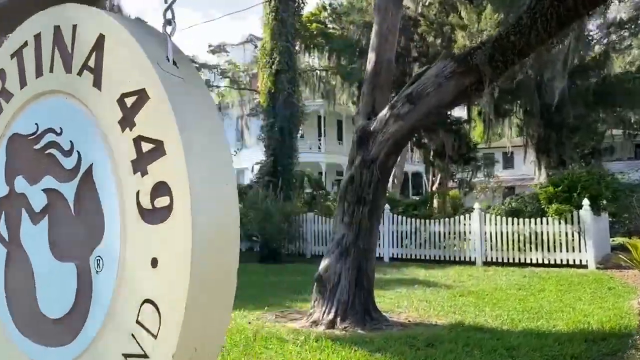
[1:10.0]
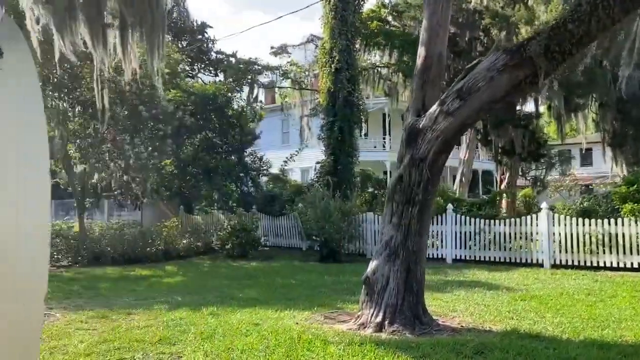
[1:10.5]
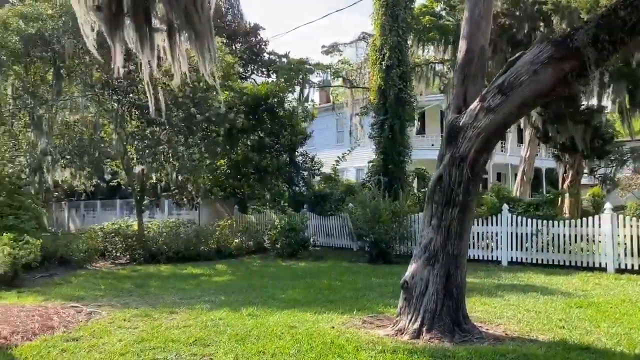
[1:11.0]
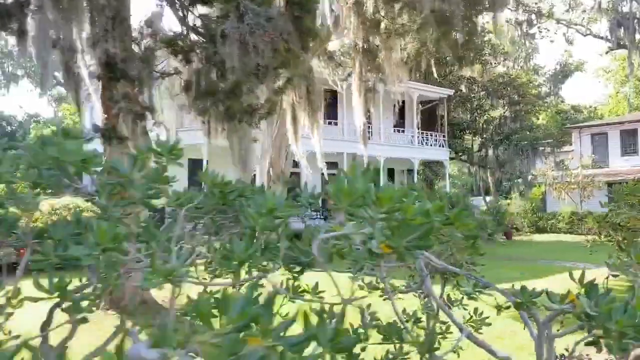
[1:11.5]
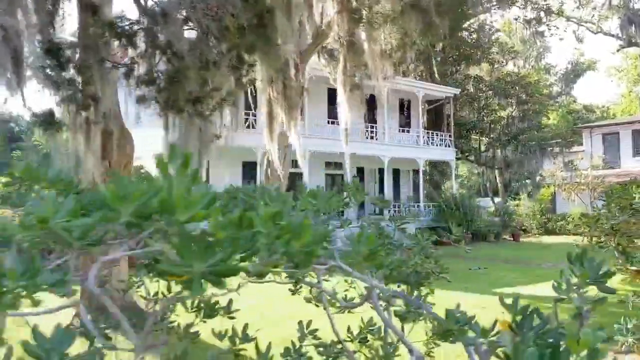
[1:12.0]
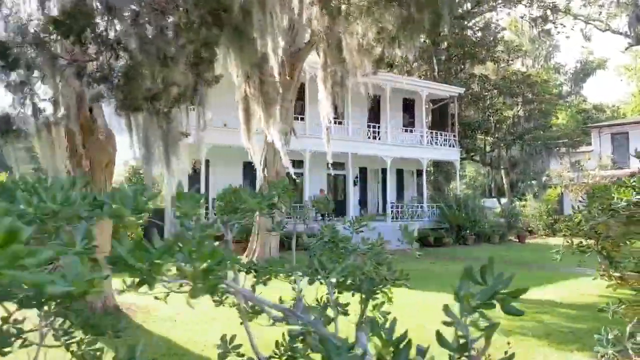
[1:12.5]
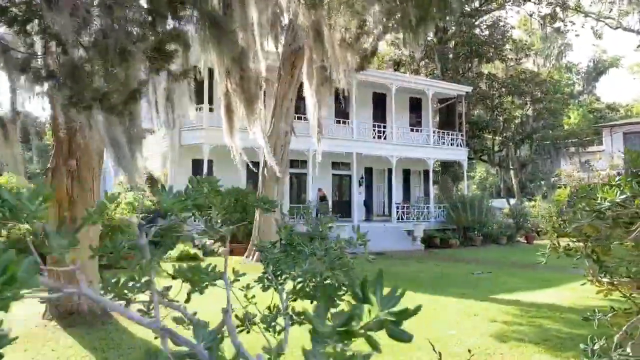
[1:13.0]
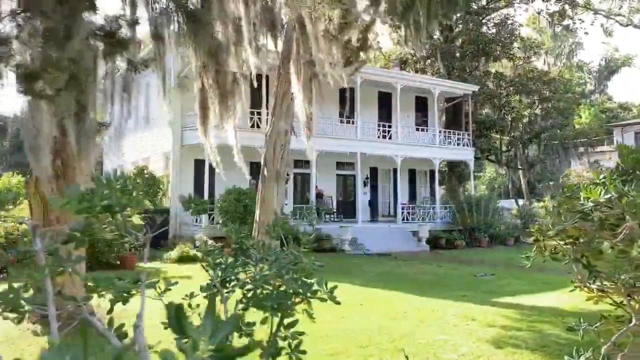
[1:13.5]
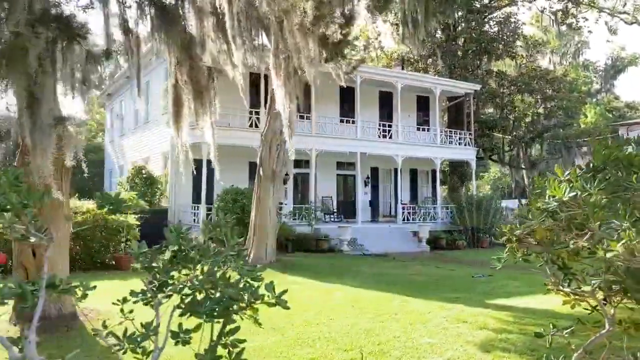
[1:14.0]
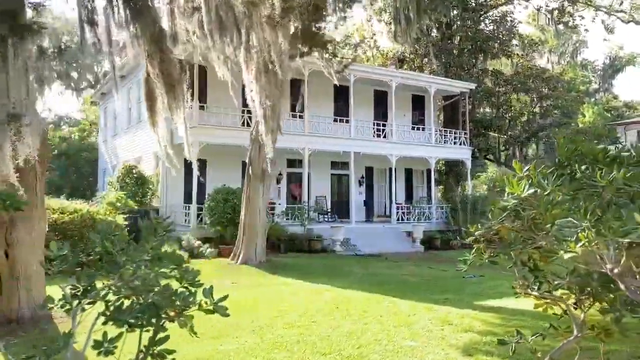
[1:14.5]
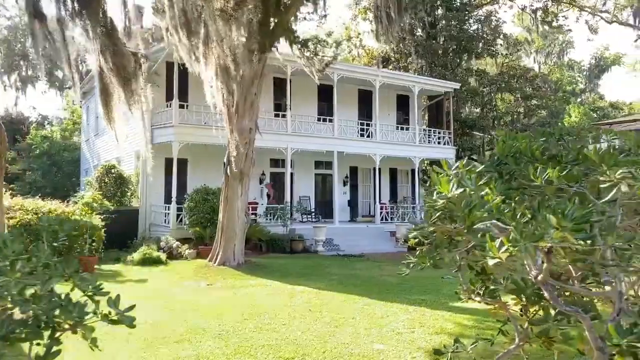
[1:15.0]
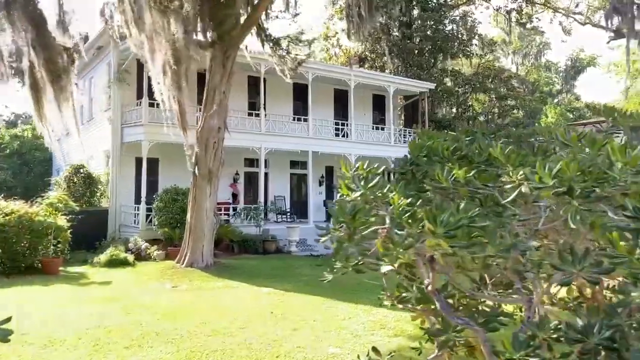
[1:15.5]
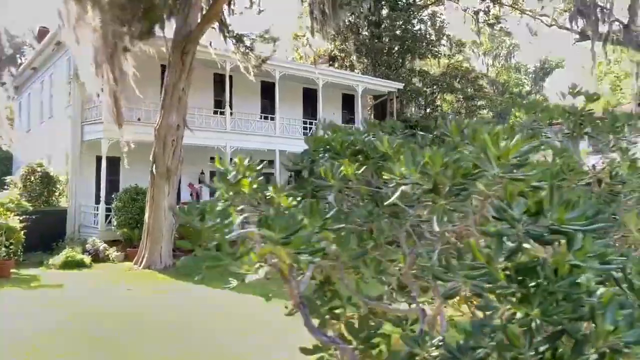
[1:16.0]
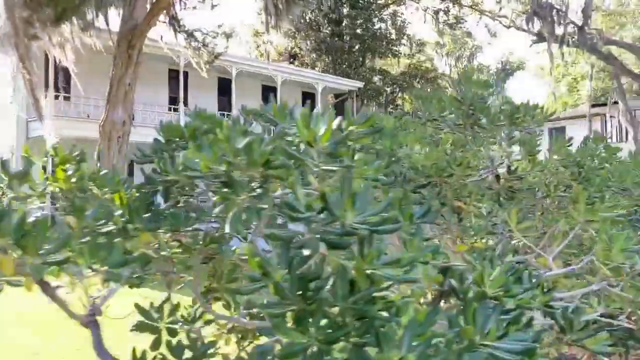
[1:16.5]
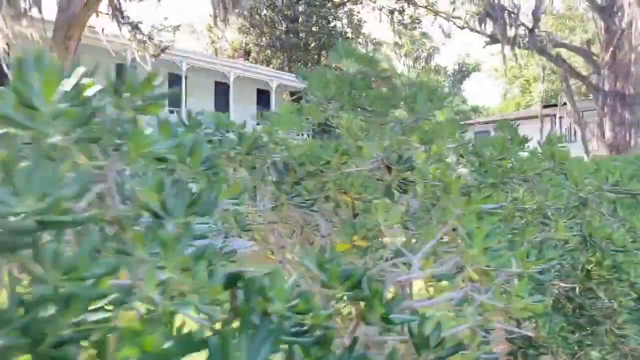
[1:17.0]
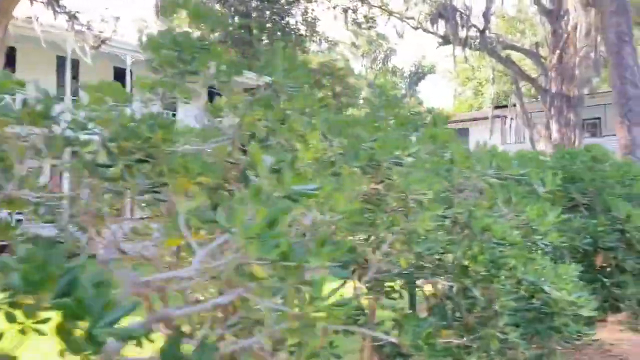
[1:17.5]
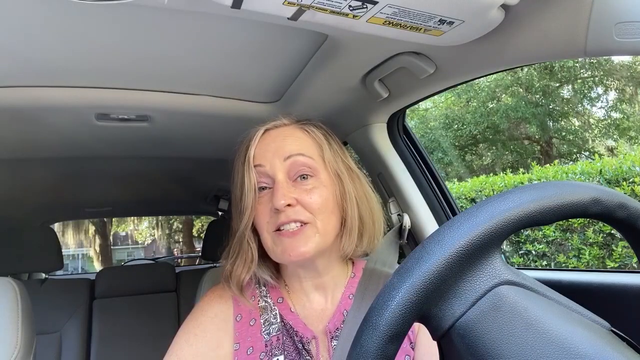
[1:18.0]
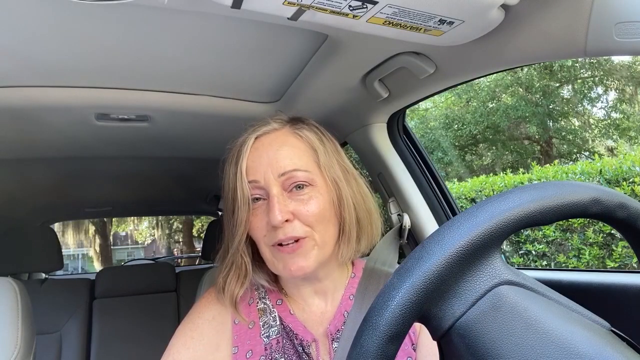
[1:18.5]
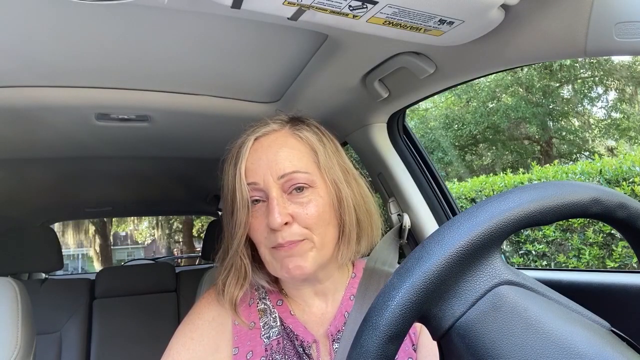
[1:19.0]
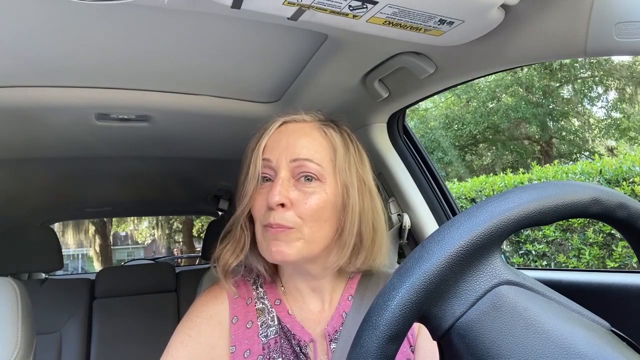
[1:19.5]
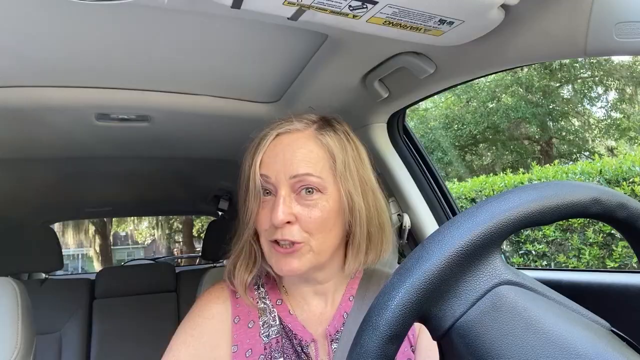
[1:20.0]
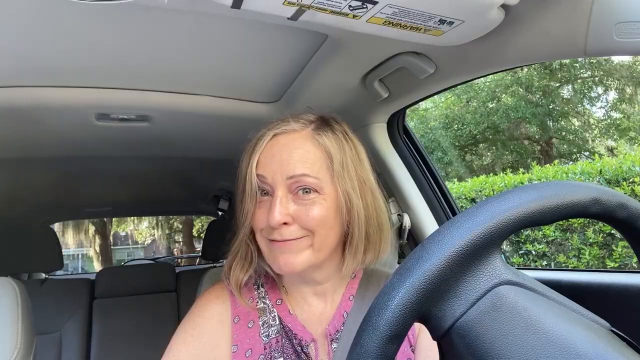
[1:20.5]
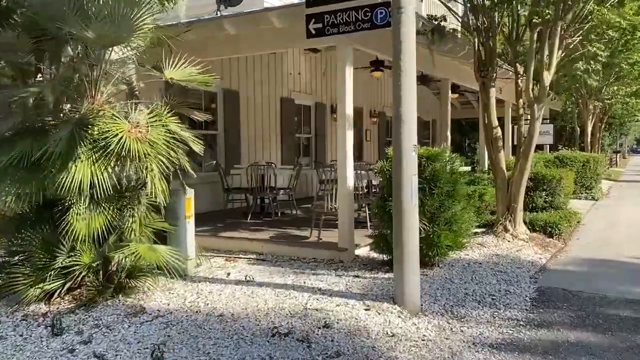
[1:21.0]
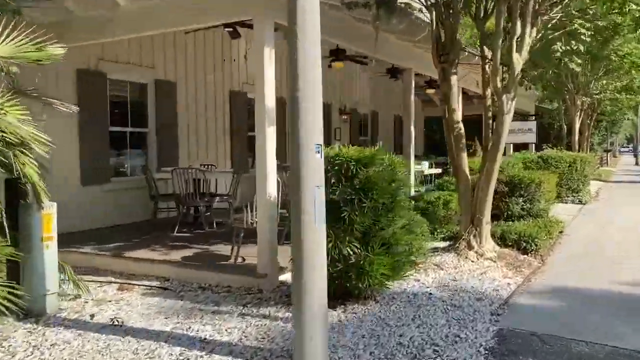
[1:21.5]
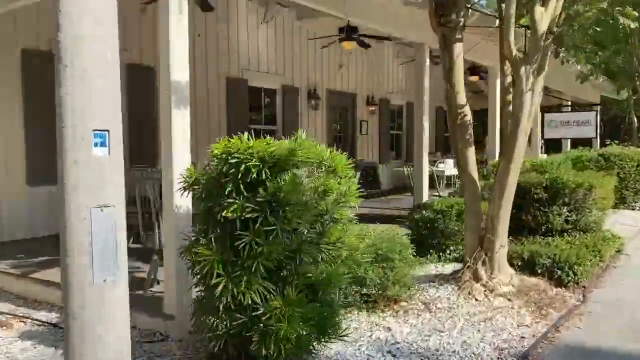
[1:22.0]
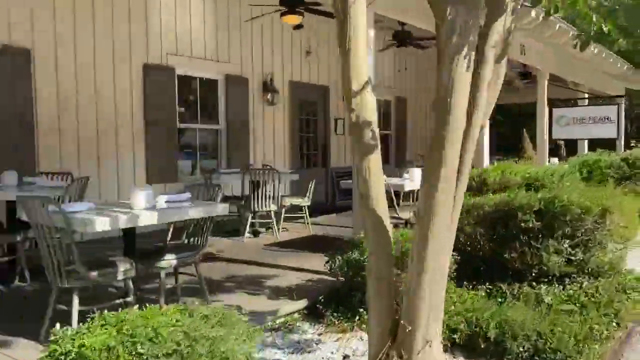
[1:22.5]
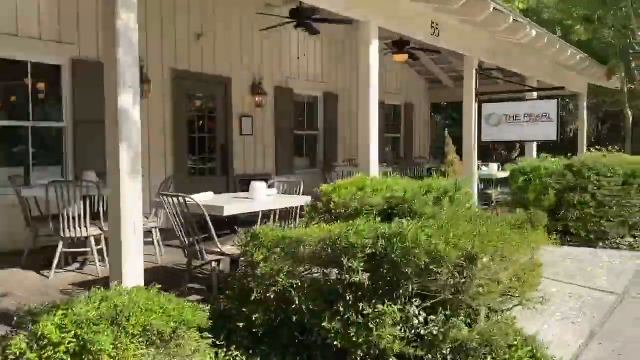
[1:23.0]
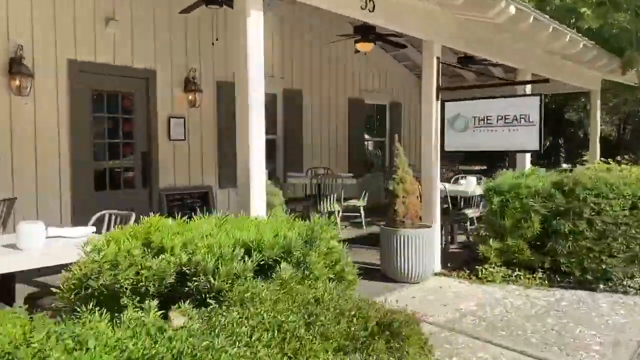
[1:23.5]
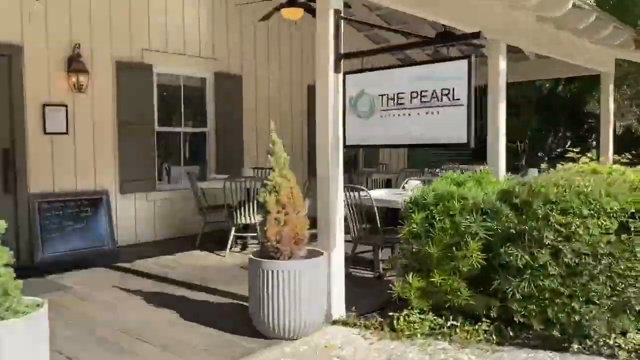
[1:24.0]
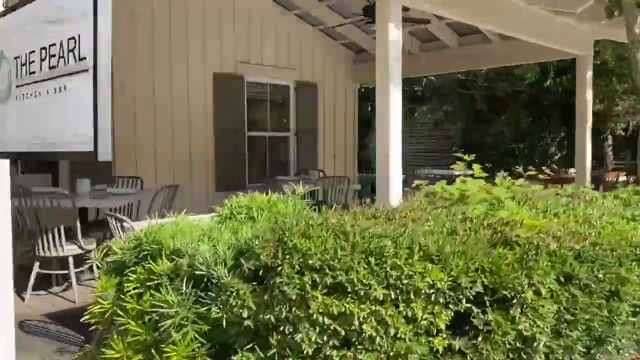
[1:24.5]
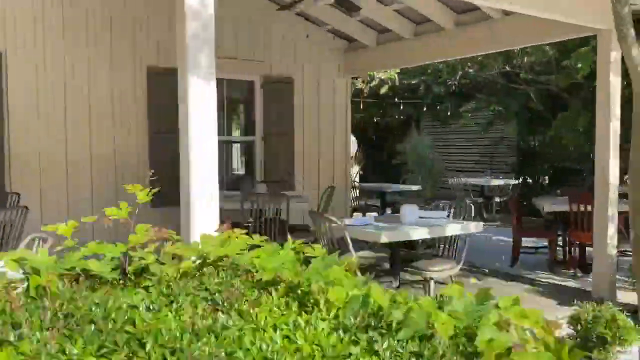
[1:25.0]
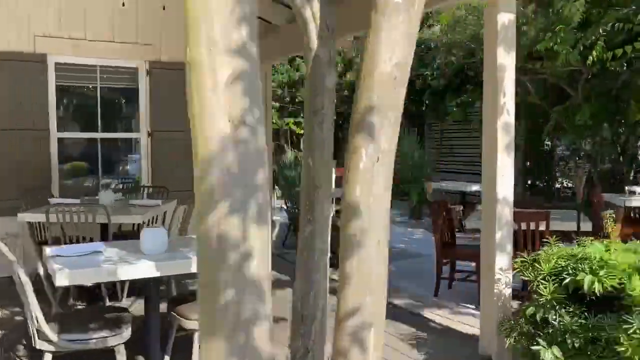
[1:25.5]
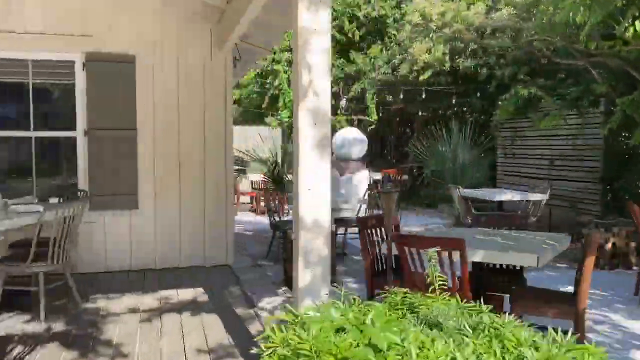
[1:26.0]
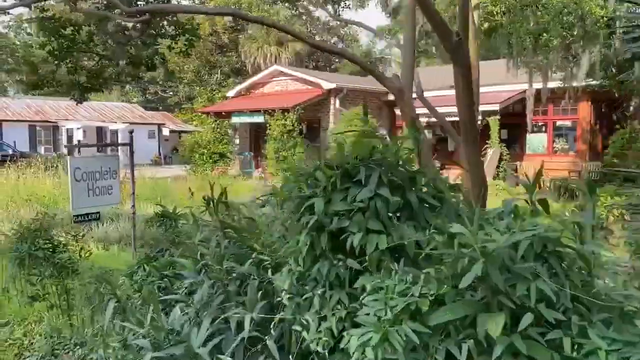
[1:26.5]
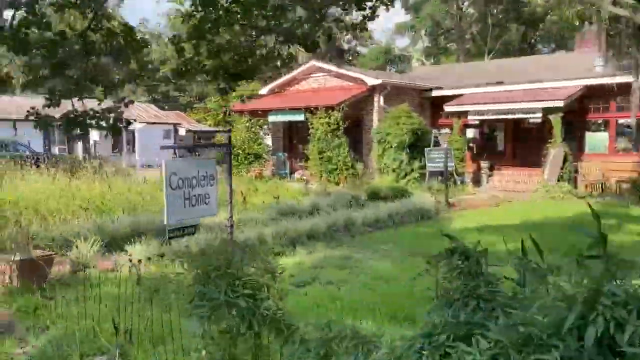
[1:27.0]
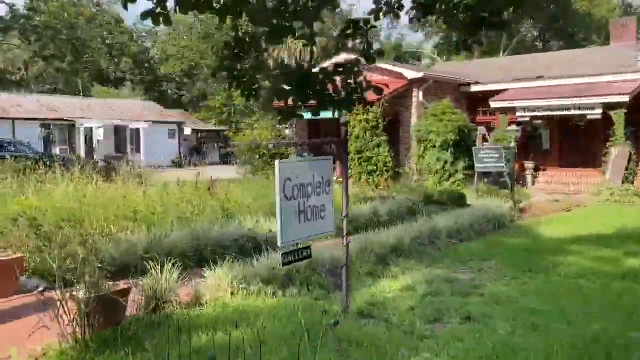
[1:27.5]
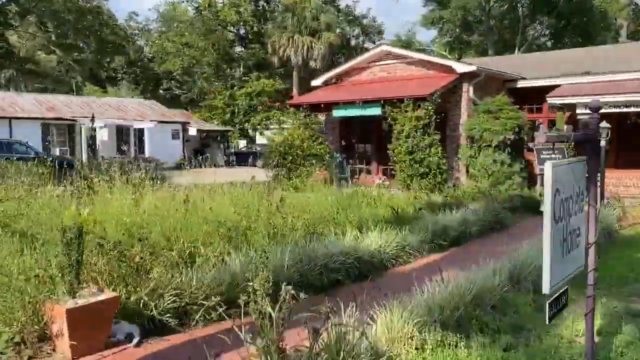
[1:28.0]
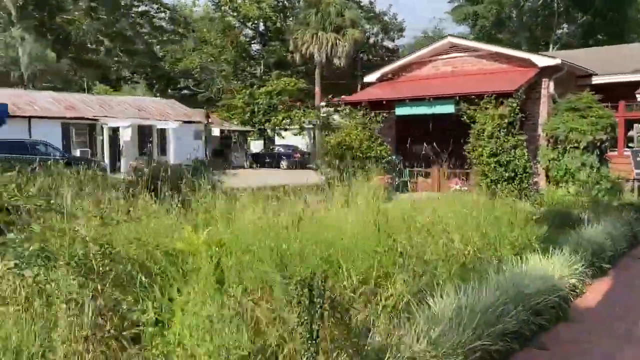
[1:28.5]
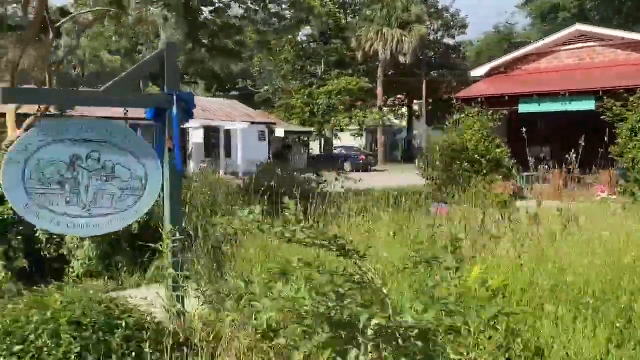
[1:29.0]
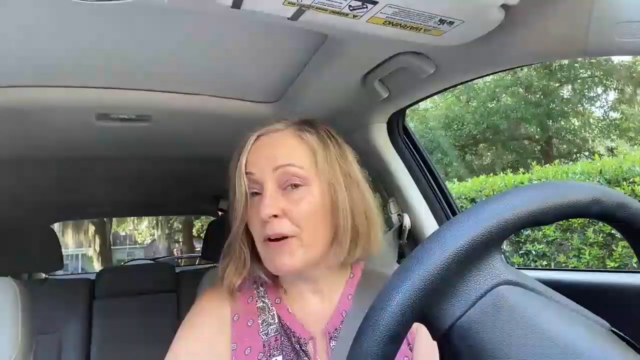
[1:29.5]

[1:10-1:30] Outdoors, the surrounding area is green, with a lot of shaggy-type trees, and it looks like an expensive residential neighborhood. The immediate house looks ornate, very large and white, with a very 1800s vibe, almost plantation-like. The camera starts to walk, as if in the front yard of the house, and trees pass by, showing a lot of vegetation. A slightly better view of the house comes into view, and then the video changes to the inside of a vehicle, where an older woman is talking into a camera. The vehicle appears to be parked. This lasts only a few seconds before the camera goes back outside for kind of a sped-up shot of the exteriors of different houses, with different clips of different homes. They all appear to be one story, and they have signs outside them hanging on black metal poles. Some of the houses look fancy and expensive, while some are smaller and more dilapidated.